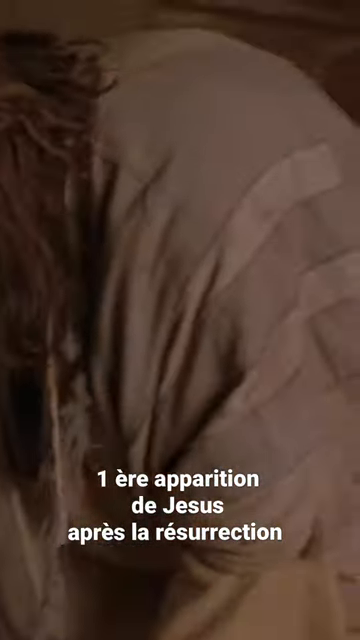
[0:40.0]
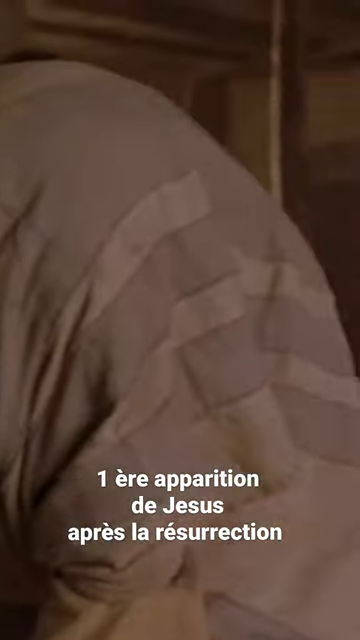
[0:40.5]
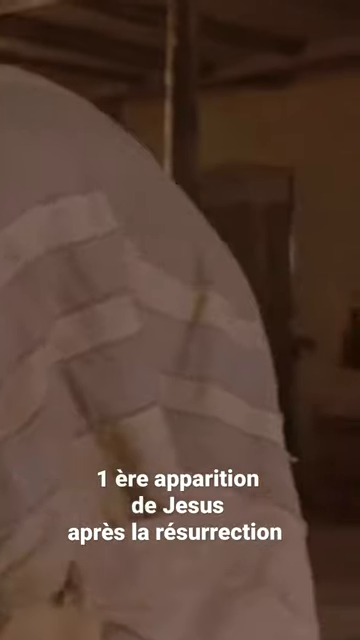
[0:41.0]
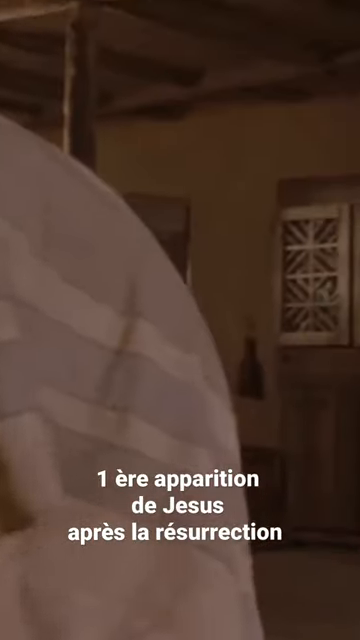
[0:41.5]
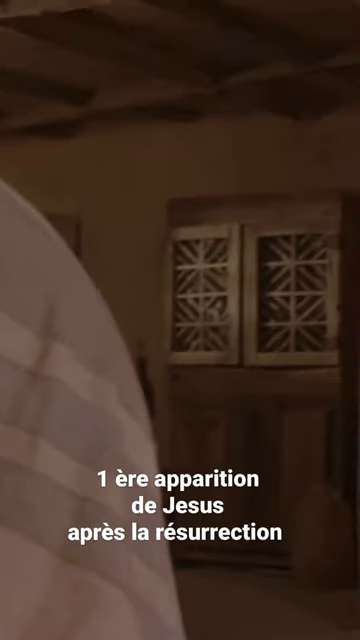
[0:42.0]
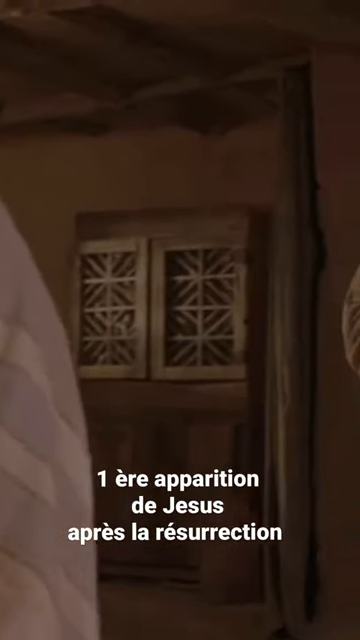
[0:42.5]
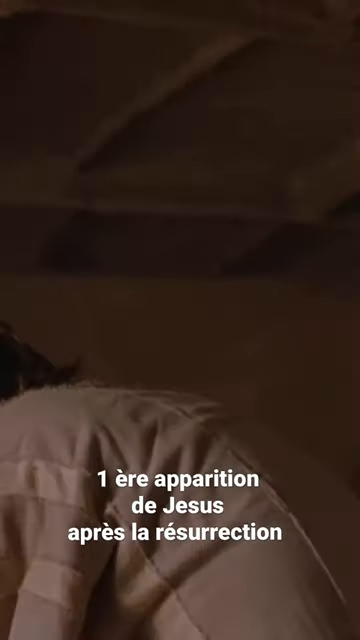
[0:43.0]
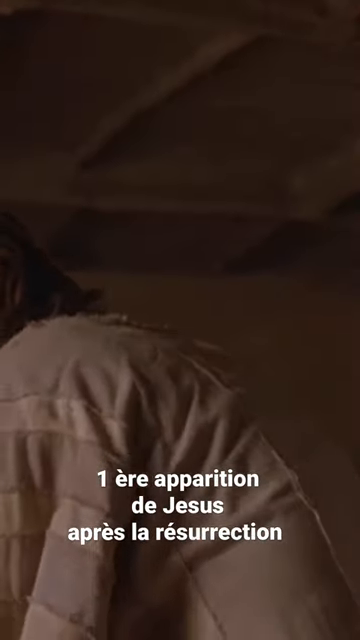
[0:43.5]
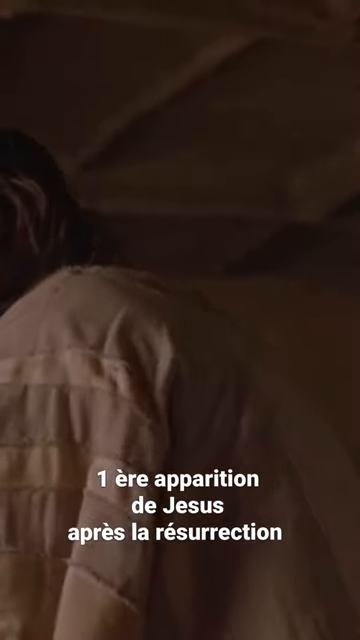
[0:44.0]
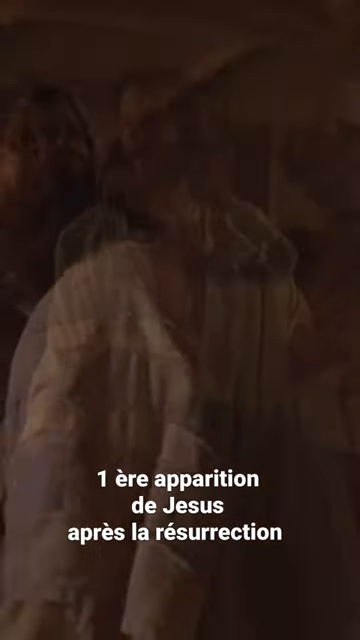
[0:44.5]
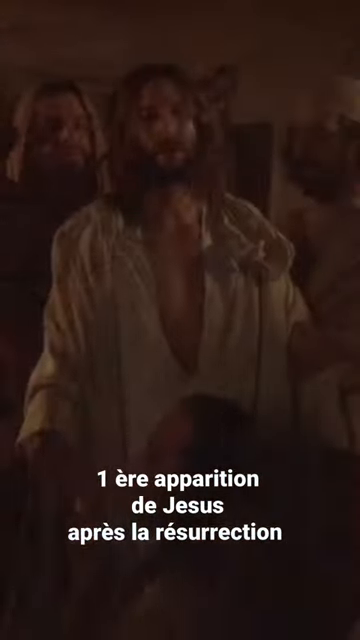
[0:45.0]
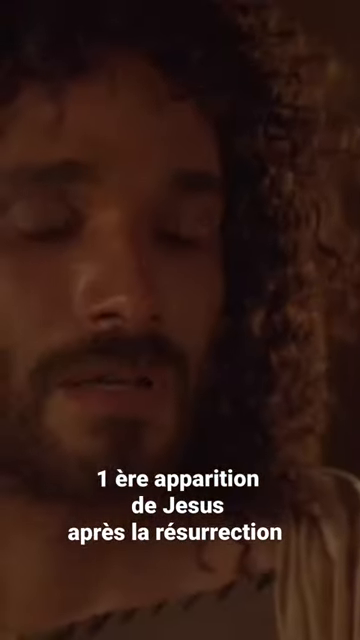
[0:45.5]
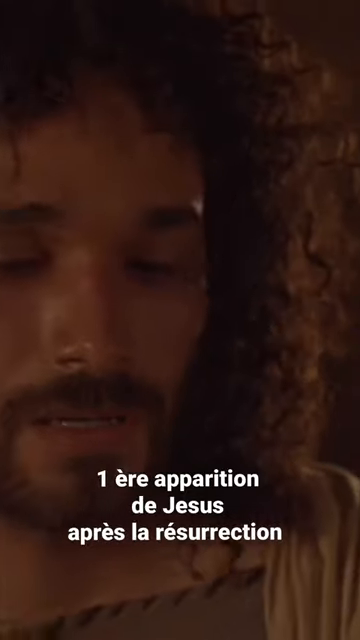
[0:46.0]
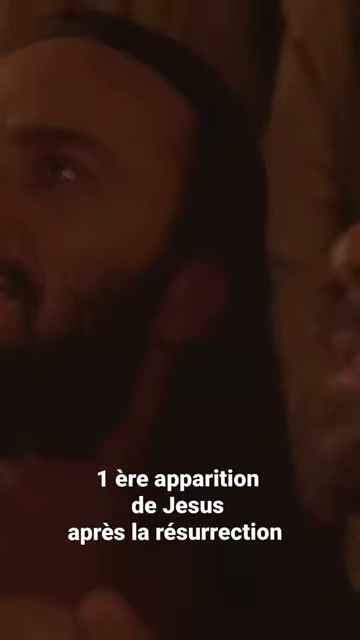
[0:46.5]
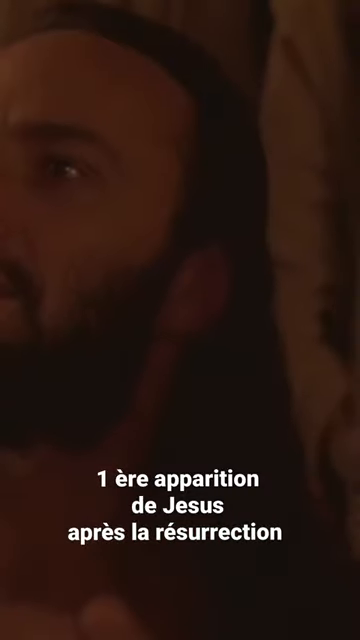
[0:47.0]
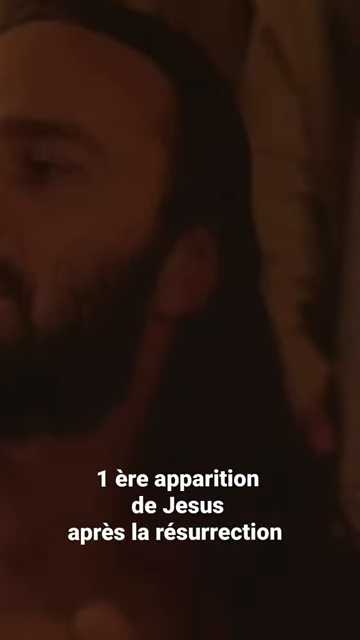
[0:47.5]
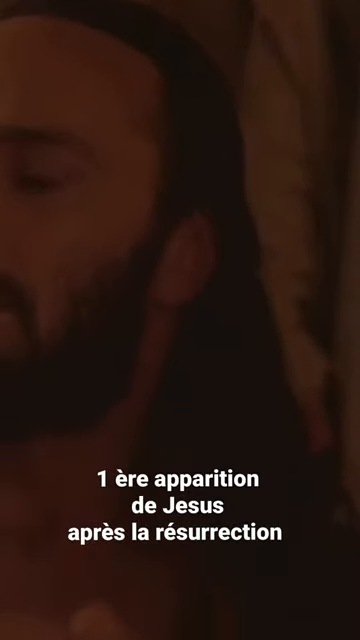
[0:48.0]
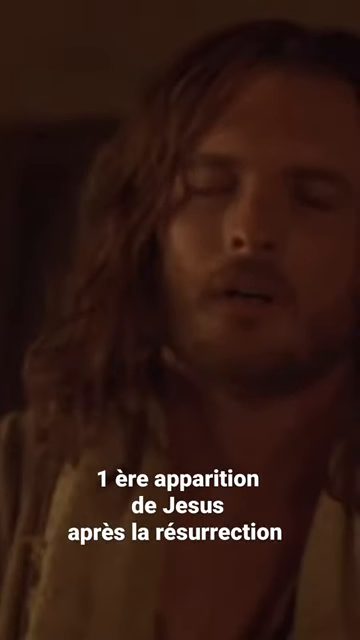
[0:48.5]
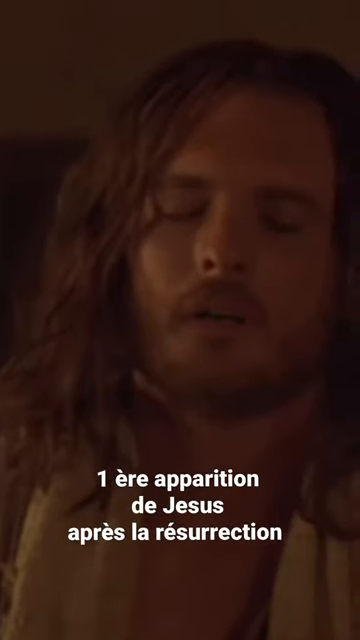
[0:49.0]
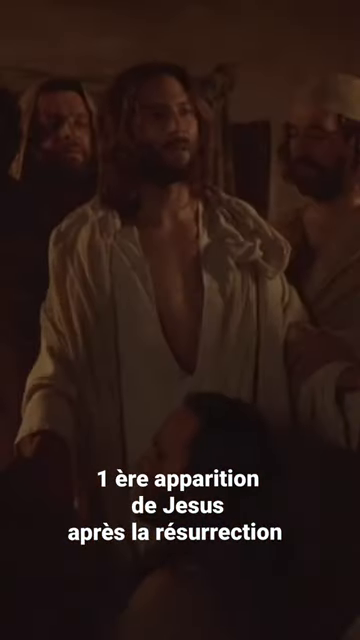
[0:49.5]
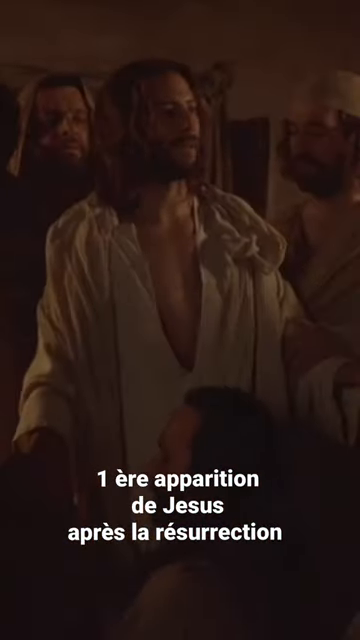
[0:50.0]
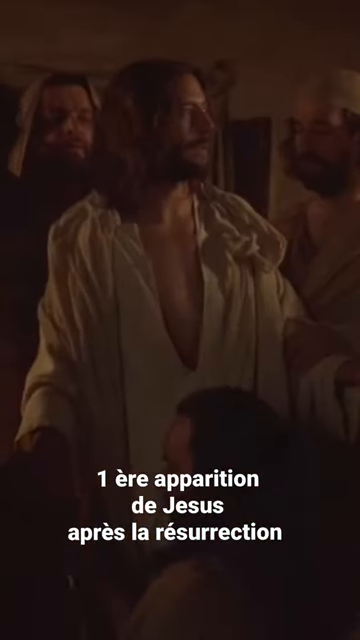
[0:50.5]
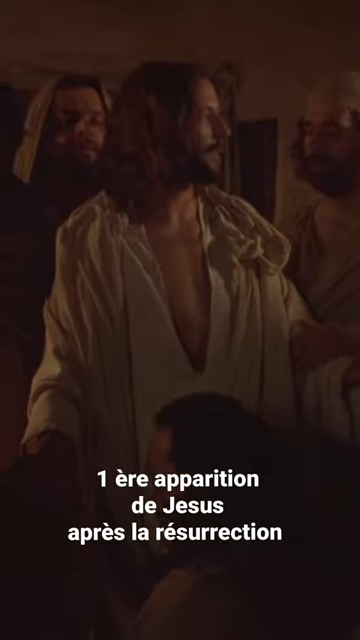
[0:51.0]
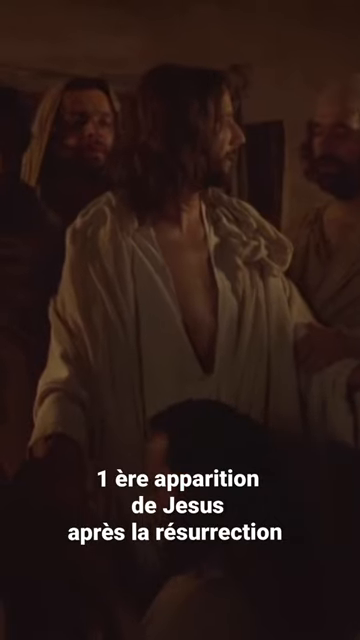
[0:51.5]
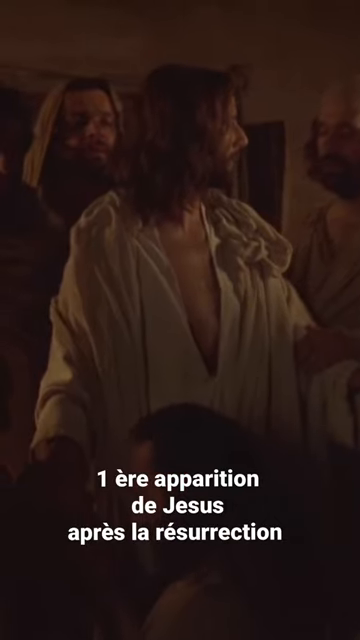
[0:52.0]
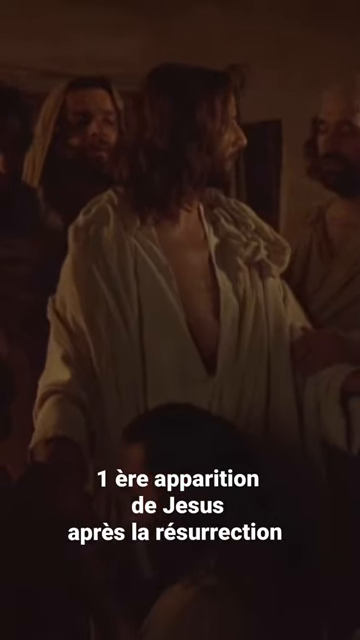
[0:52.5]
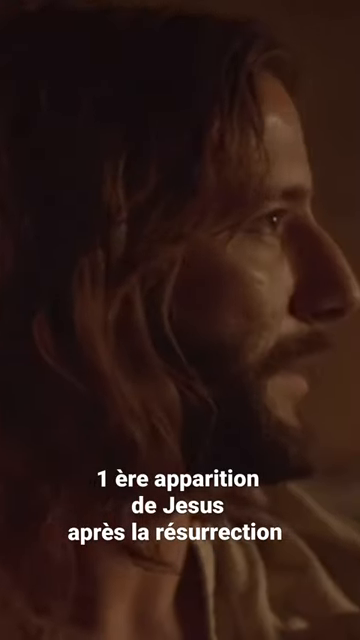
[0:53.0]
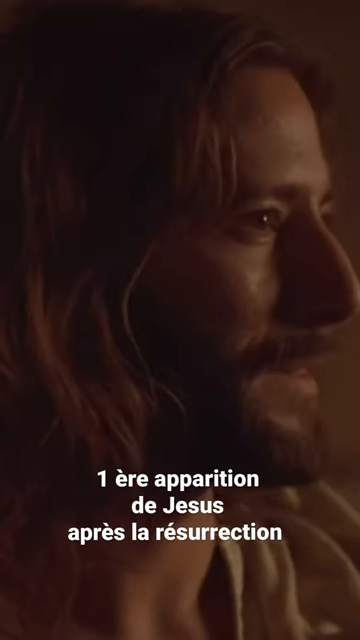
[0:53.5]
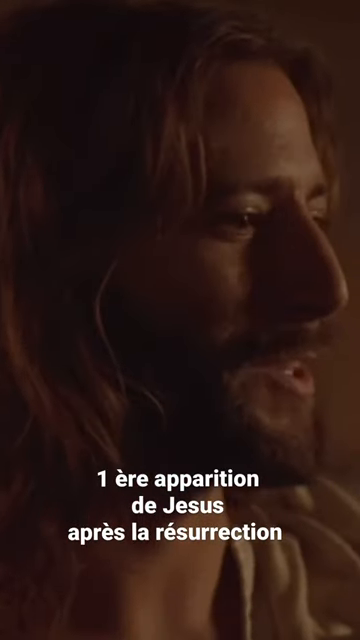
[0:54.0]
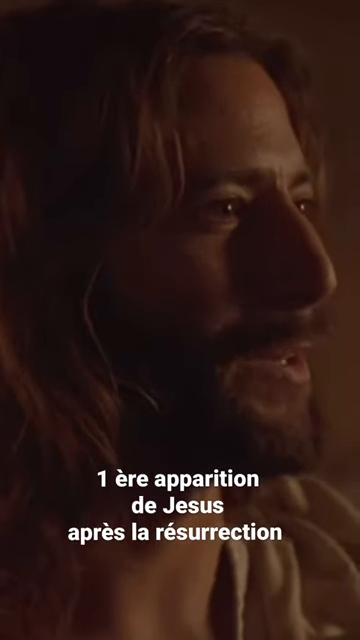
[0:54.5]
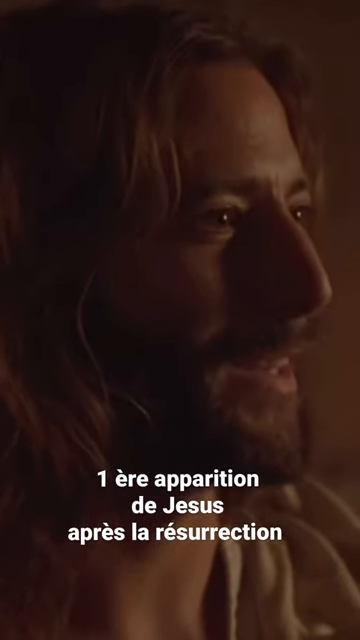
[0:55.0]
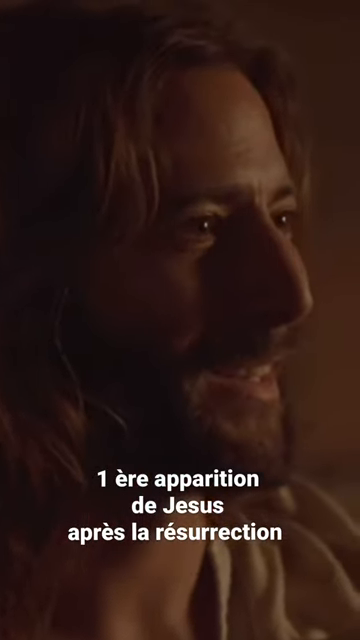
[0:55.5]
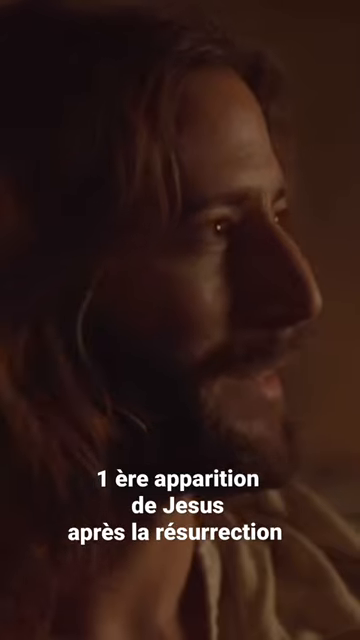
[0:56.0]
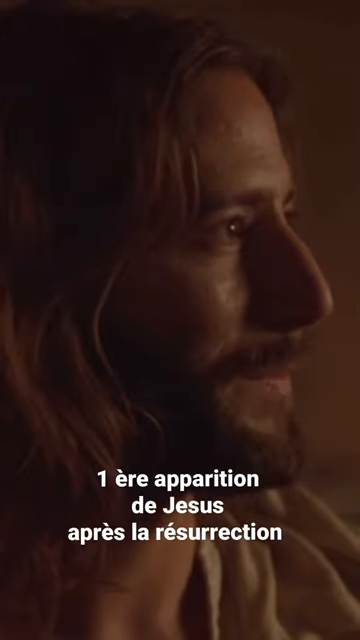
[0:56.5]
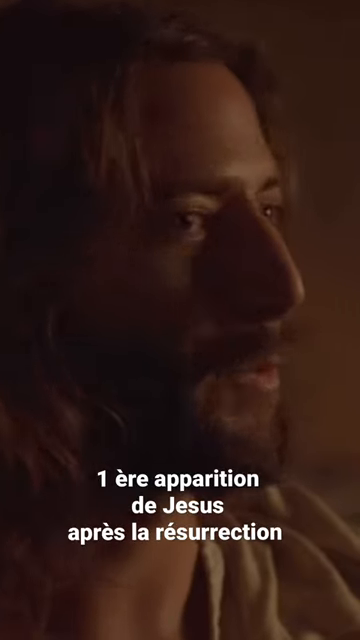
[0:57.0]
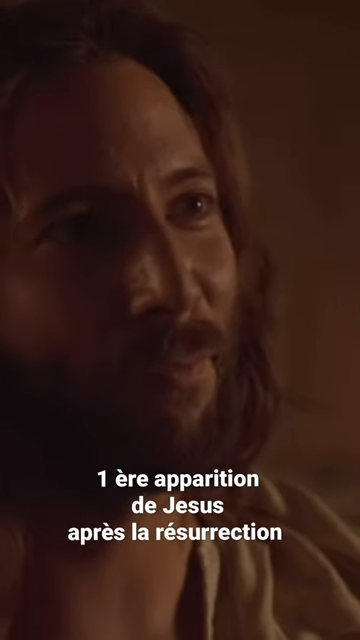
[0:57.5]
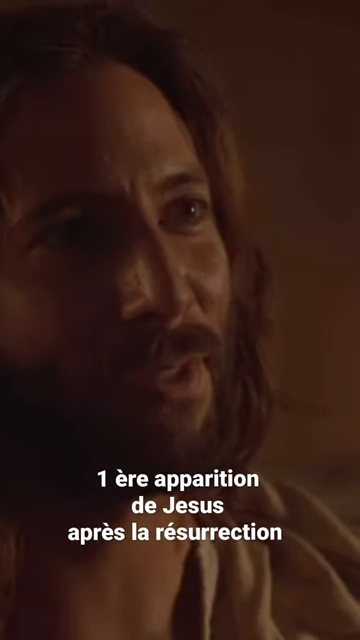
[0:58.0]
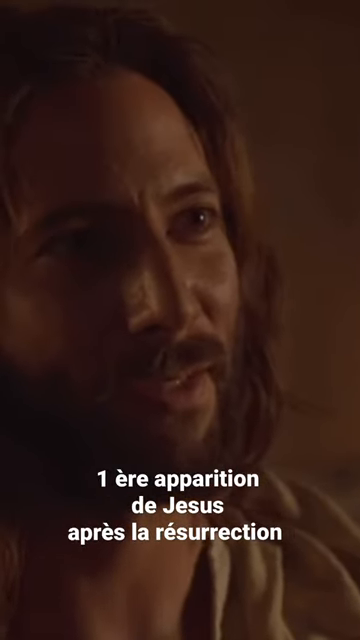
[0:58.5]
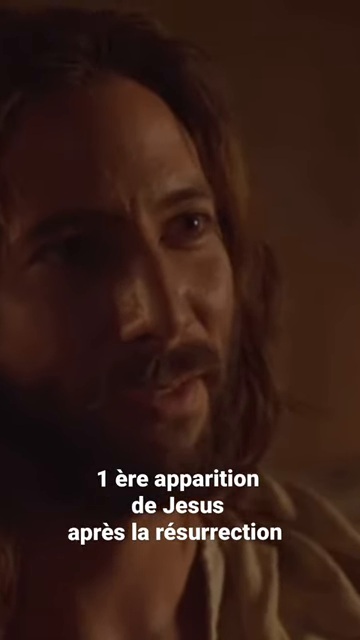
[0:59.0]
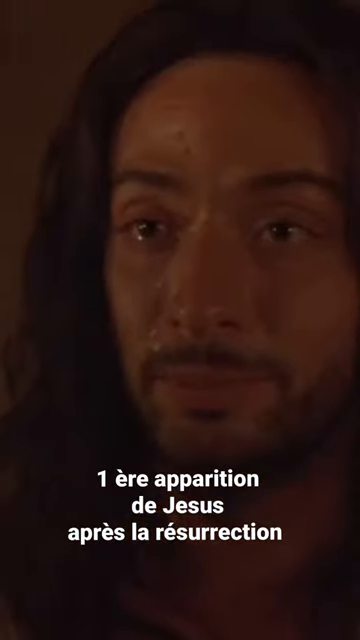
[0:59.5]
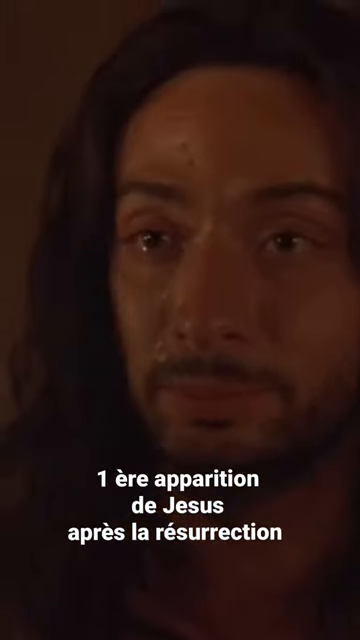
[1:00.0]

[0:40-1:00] Jesus kneels down over the table, and as he gets up he speaks to the men around him again. They are all gathered around him and all look very sad, their faces dropping as if he is telling them something very sad. He speaks with a kind of grin; he does not look sad but at peace, with a slight smile as he talks, as if comforting the men. The shot zooms tightly on one of the men's faces, and he is crying, apparently moved or saddened by what he is being told. The text is still at the bottom of the screen. As the camera pans around the room, windows framed in wood and painted white are visible, and there are cloths on the walls behind the men as they stand in a circle. Their robes are raggedy and dirty.